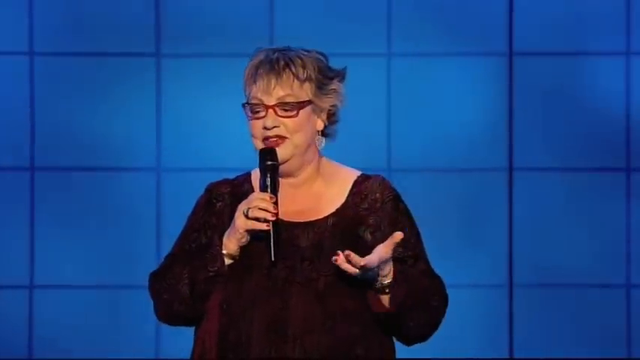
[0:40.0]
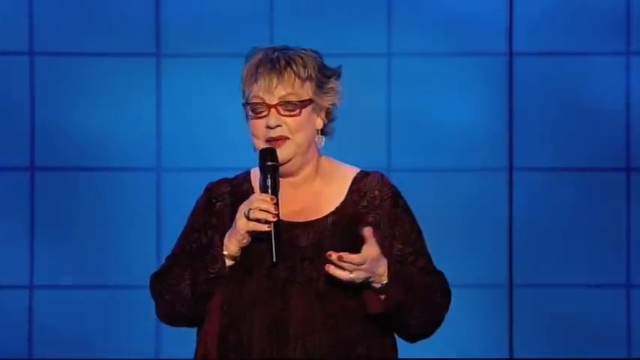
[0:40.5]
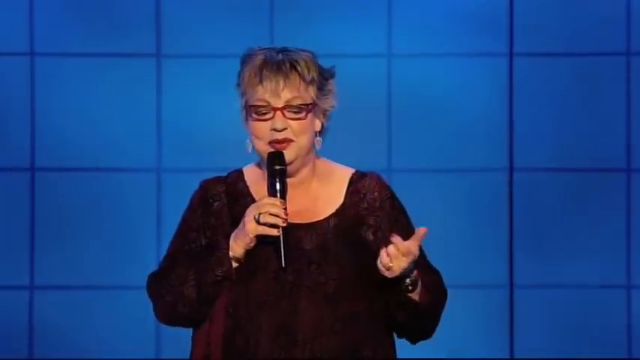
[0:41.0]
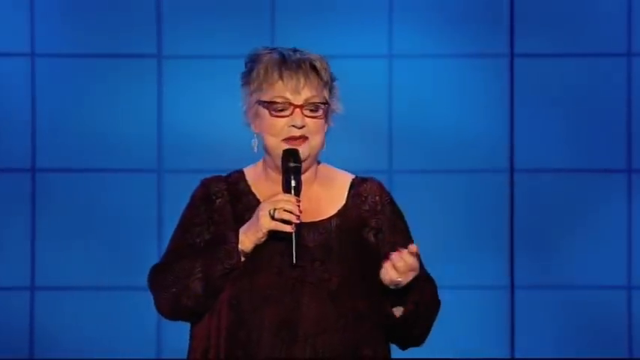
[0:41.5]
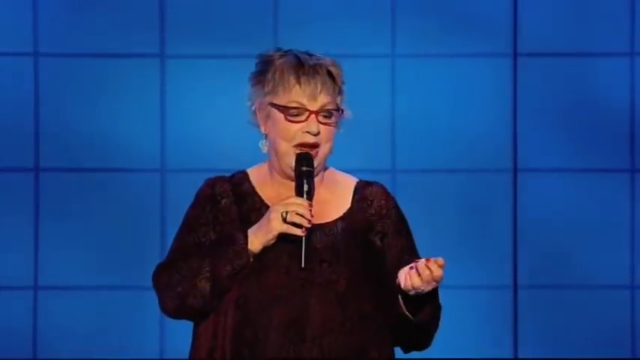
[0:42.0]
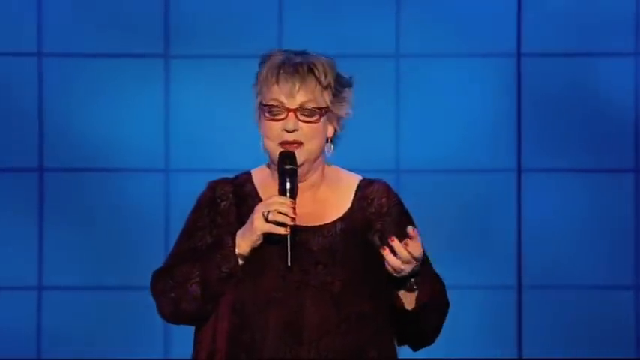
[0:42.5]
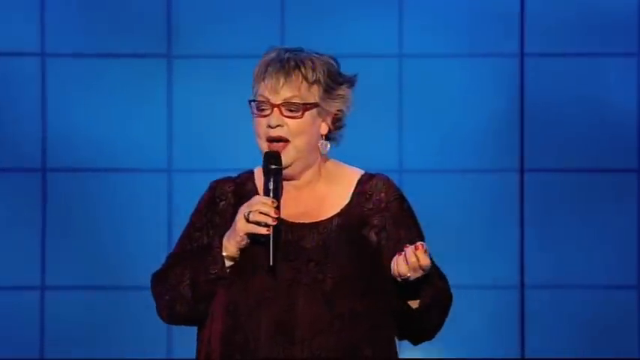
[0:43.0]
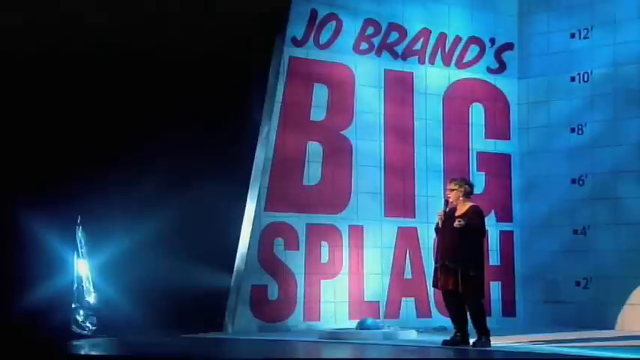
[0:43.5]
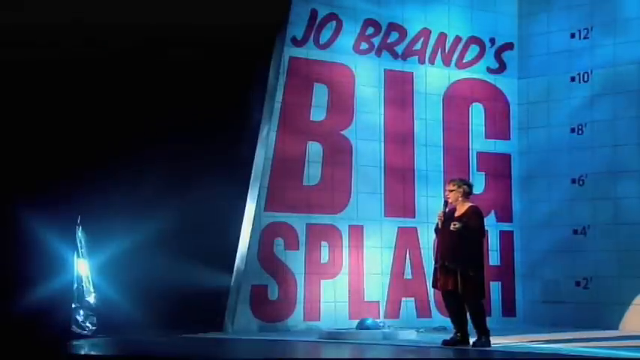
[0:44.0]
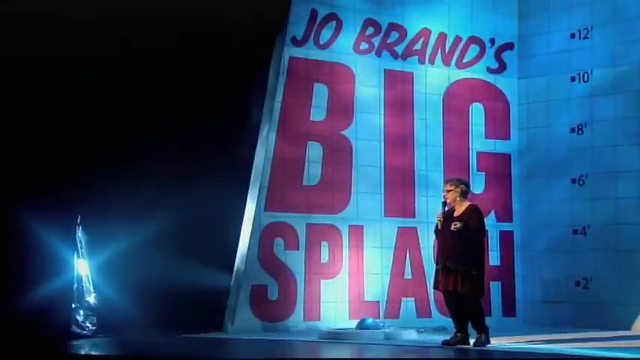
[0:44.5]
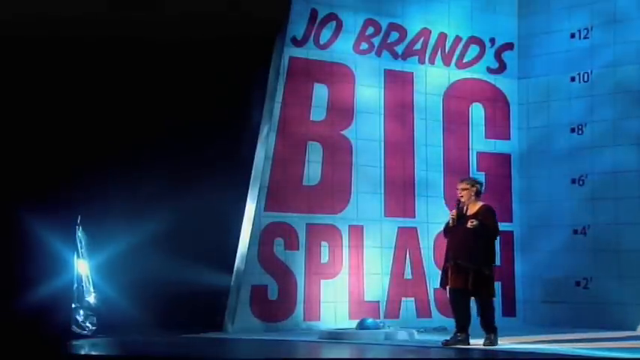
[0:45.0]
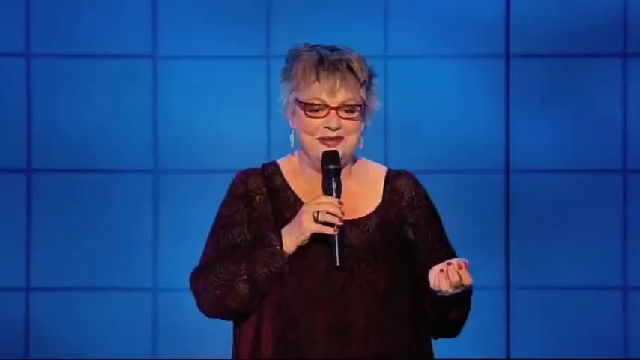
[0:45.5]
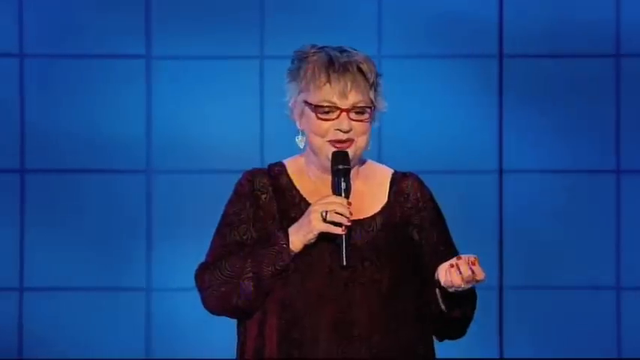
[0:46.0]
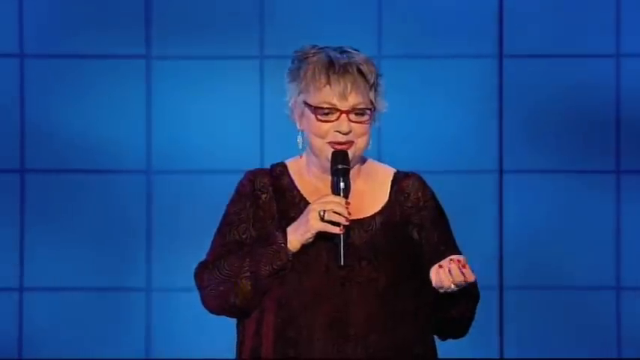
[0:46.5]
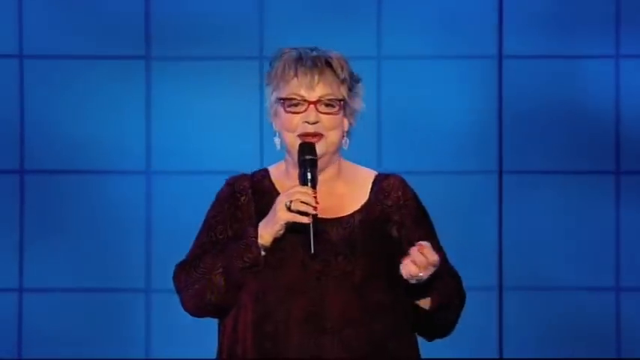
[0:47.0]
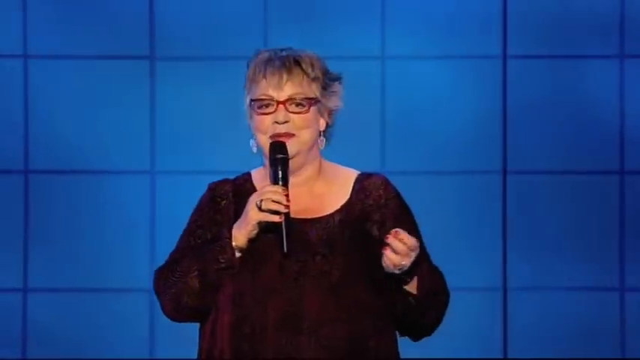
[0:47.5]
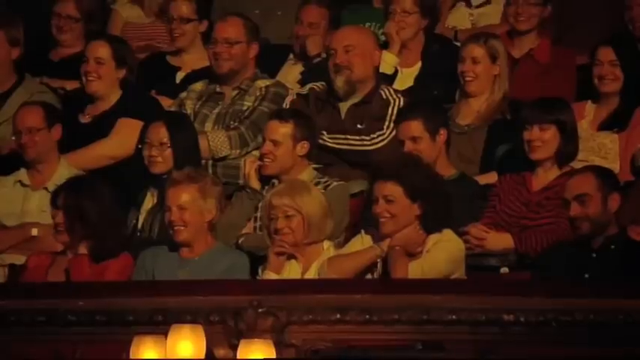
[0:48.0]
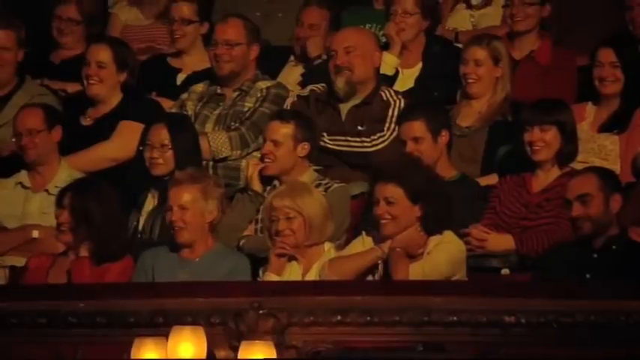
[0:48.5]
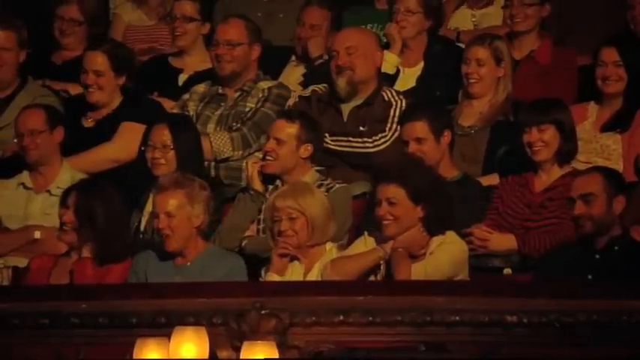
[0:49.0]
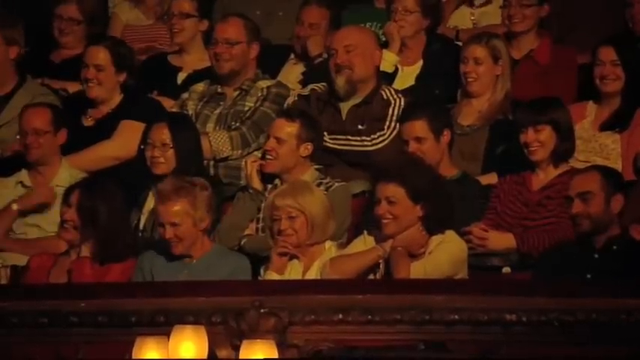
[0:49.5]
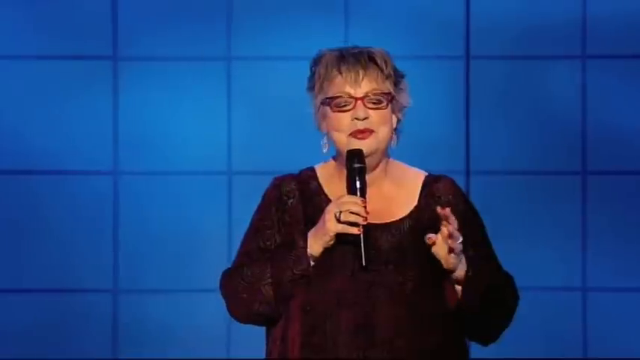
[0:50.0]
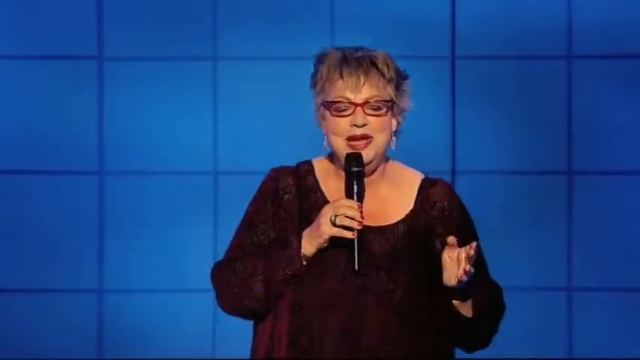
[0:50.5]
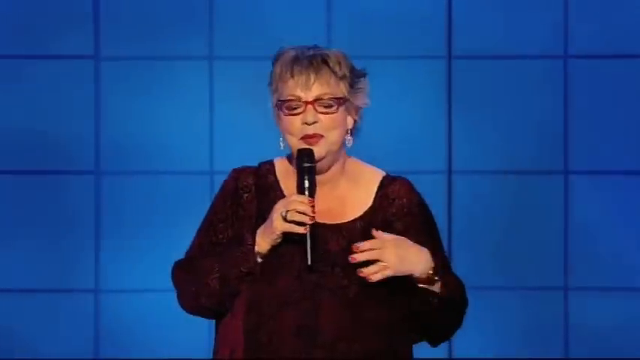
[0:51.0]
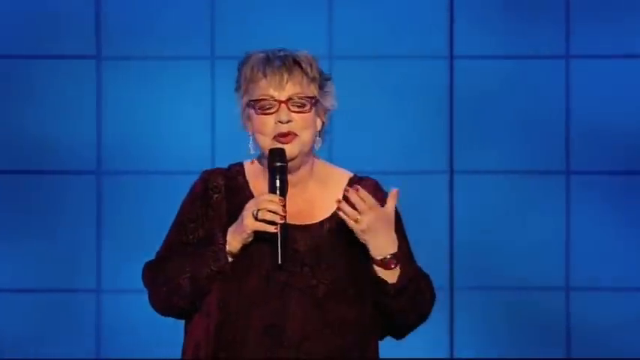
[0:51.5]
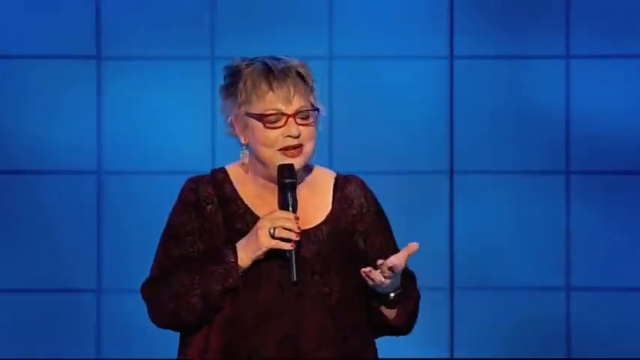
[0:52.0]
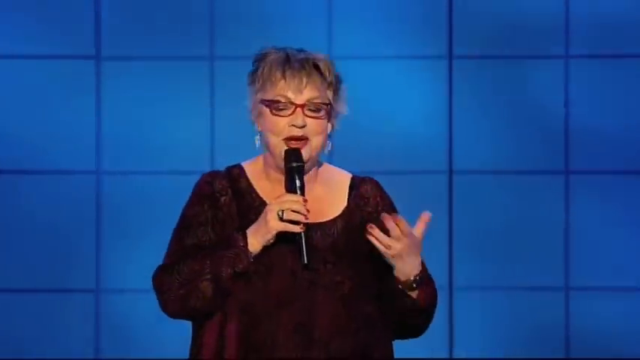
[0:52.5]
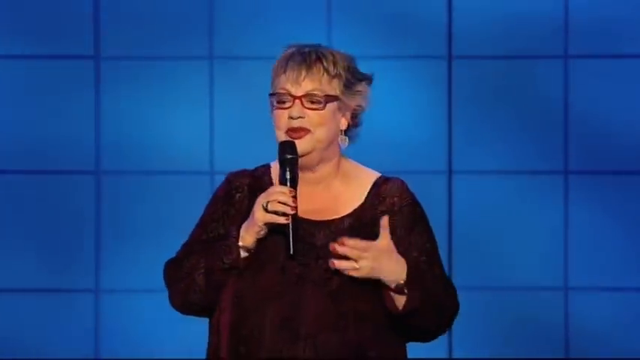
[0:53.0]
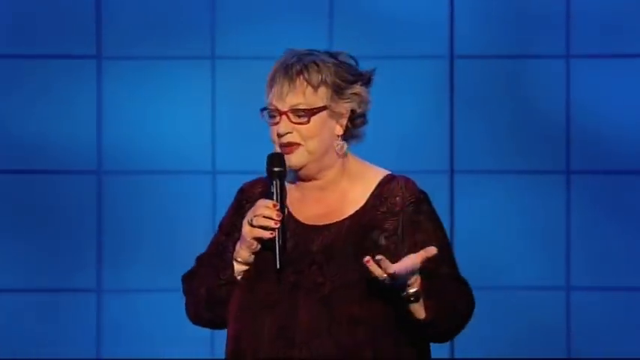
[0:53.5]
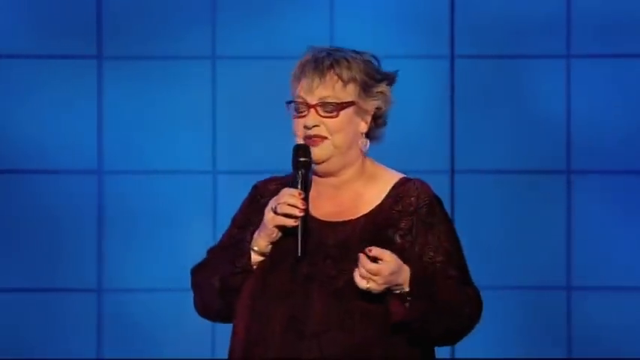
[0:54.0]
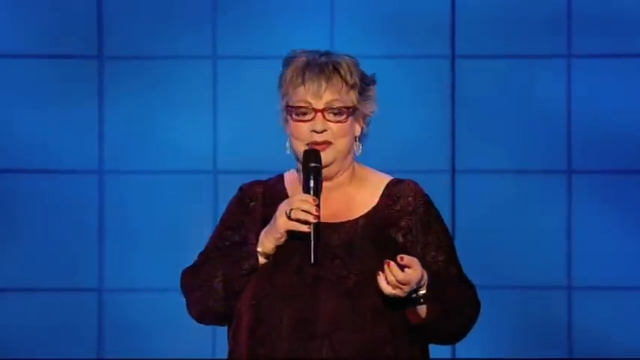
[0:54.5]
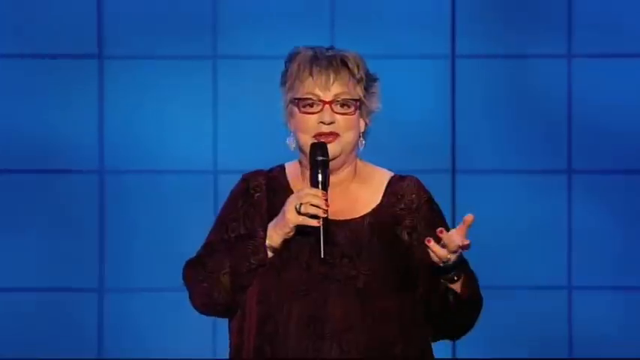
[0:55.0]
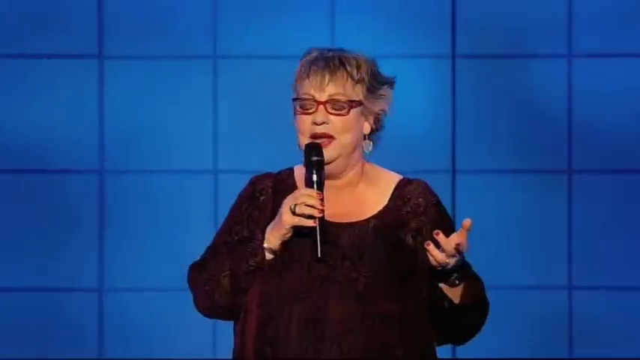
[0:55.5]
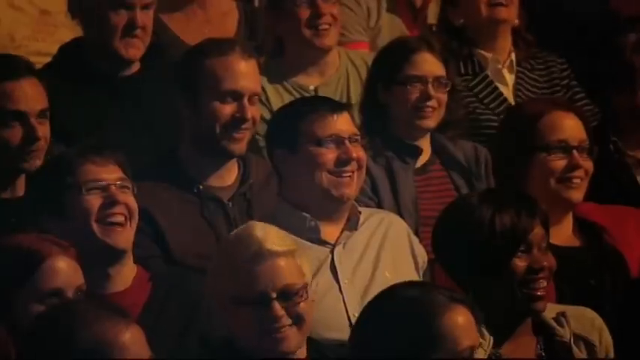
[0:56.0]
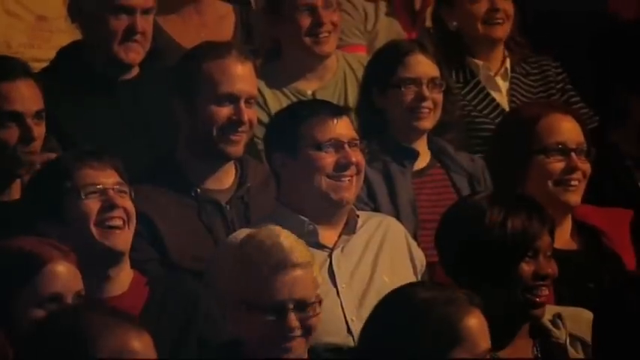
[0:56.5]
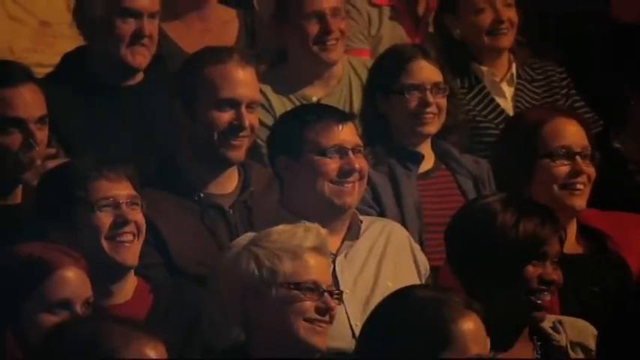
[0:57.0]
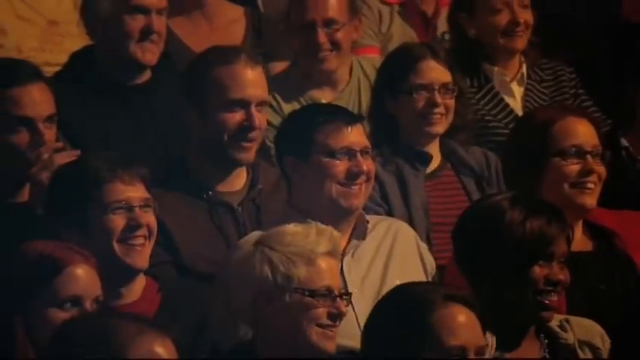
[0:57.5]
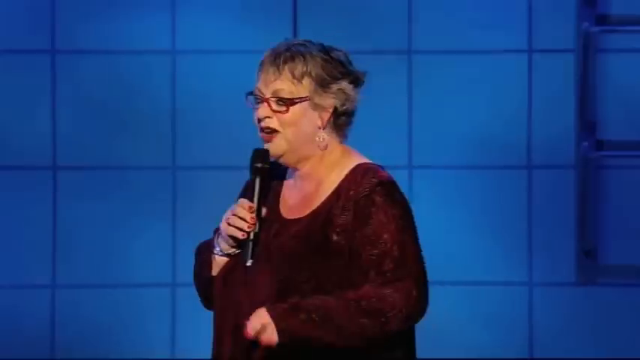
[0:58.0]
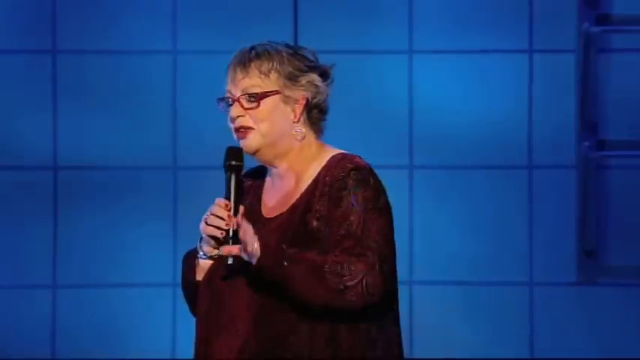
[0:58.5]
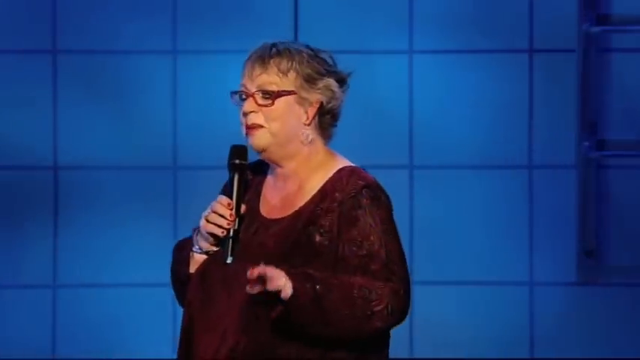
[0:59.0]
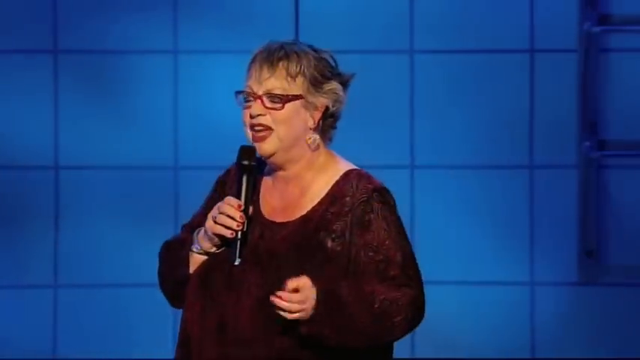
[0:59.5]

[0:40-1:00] The woman in the purple dress appears to be middle-aged or somewhat older. She wears spectacles with a thick red frame, red lipstick and long hoop earrings. Her grey hair has brunette in it. She wears rings on both hands, a black watch and red nail polish, along with black pants and black shoes. The background is blue, made of blue blocks highlighted with darker blue lines. Behind her is writing that reads "Jo Brands Big Splash", along with the numbers 12, 10, 8, 6 and 4 in descending order, each with a square bullet point in front and an apostrophe after. She stands on stage talking to a large audience, who are laughing; she is presumably a comedian telling jokes.